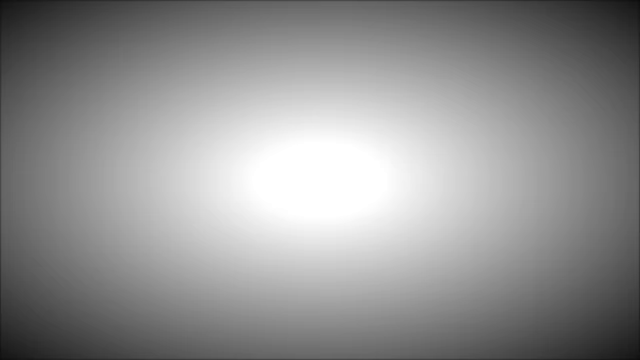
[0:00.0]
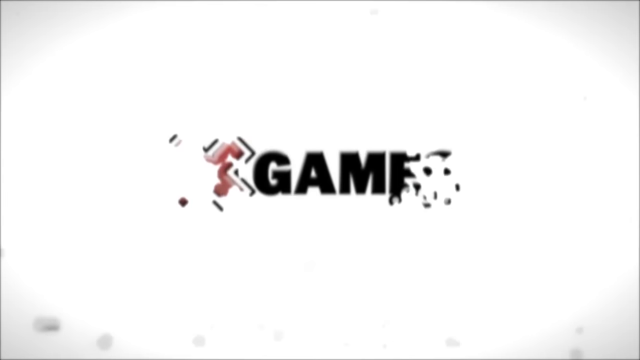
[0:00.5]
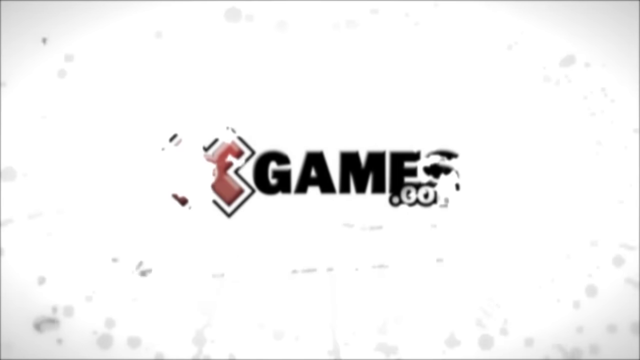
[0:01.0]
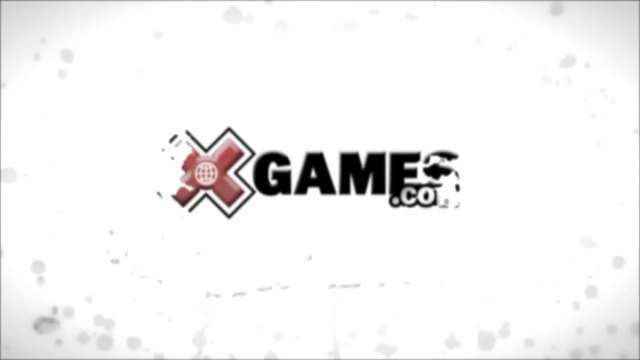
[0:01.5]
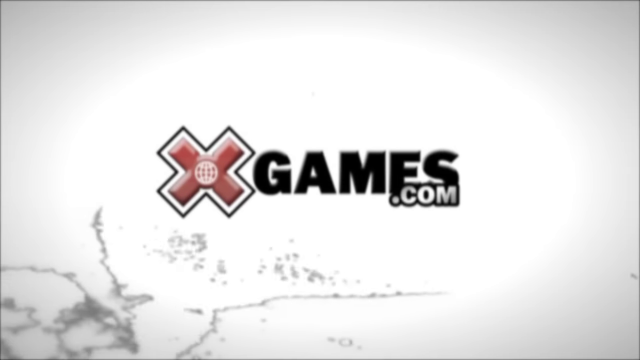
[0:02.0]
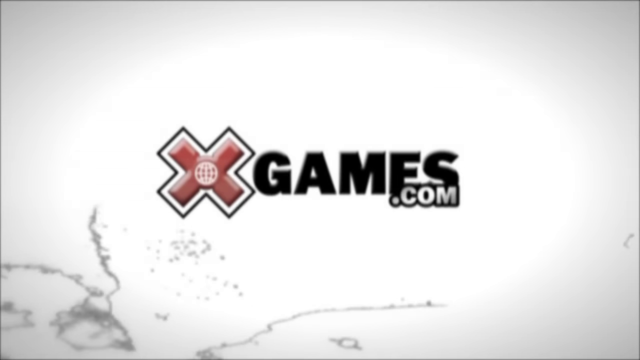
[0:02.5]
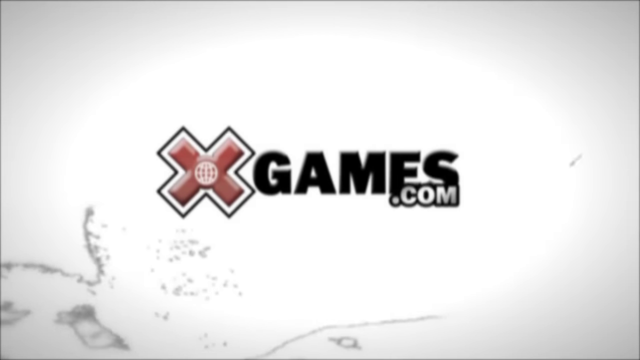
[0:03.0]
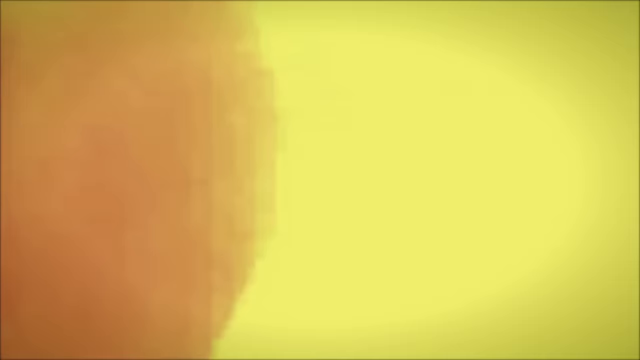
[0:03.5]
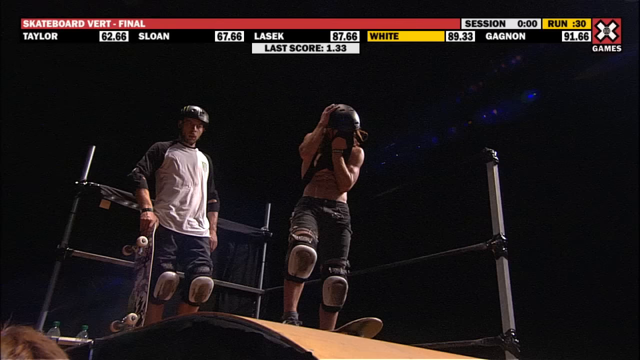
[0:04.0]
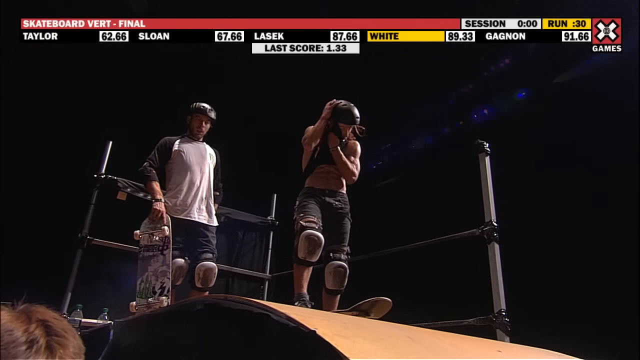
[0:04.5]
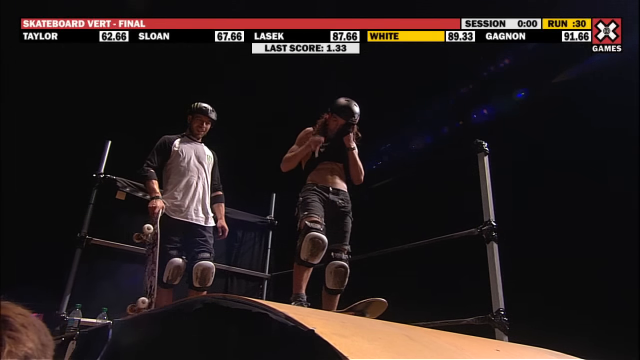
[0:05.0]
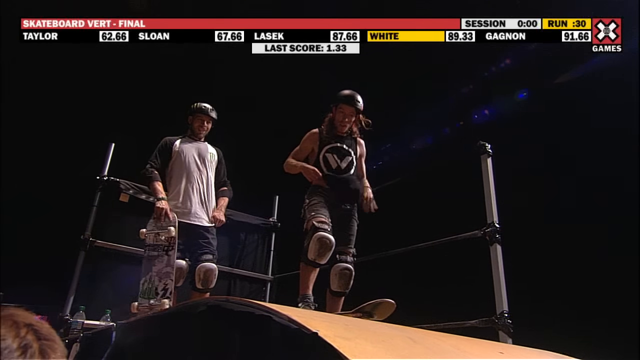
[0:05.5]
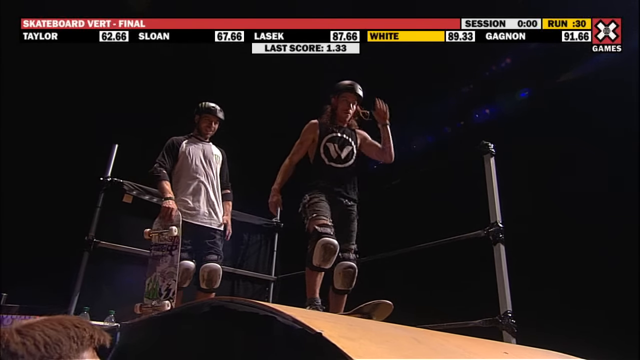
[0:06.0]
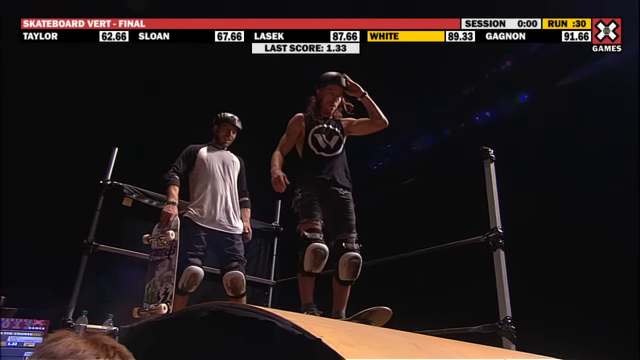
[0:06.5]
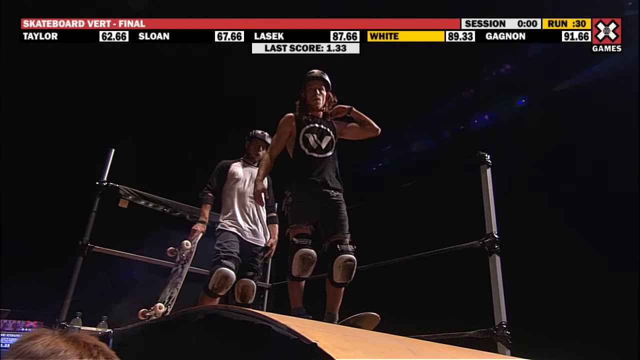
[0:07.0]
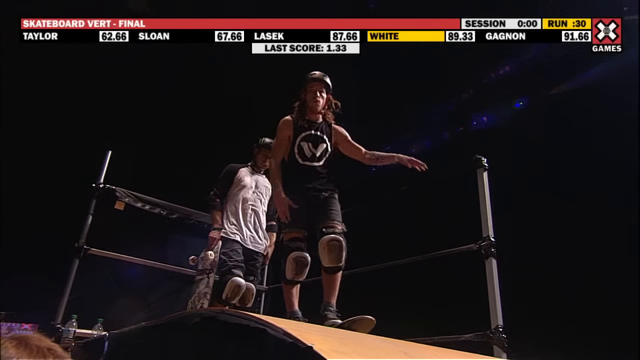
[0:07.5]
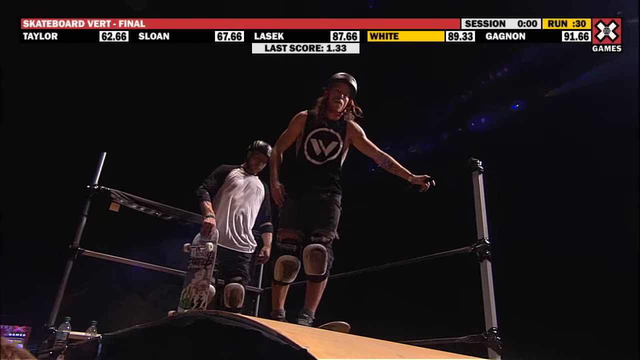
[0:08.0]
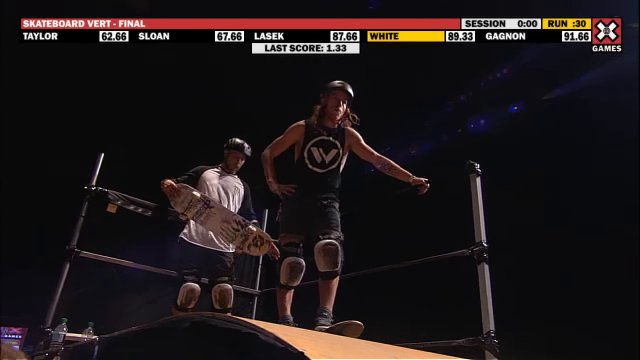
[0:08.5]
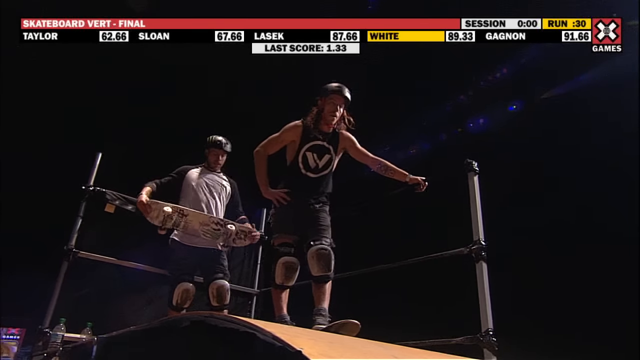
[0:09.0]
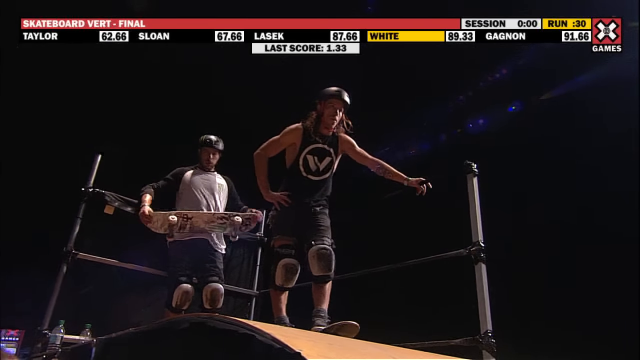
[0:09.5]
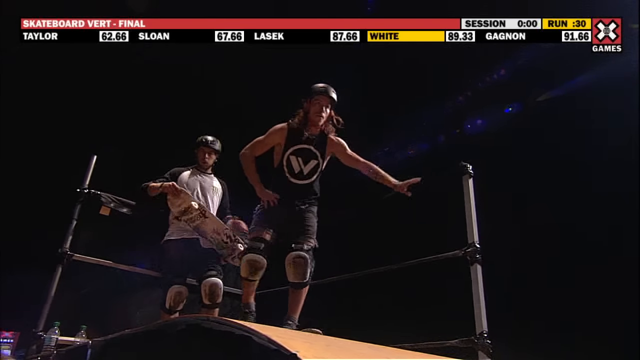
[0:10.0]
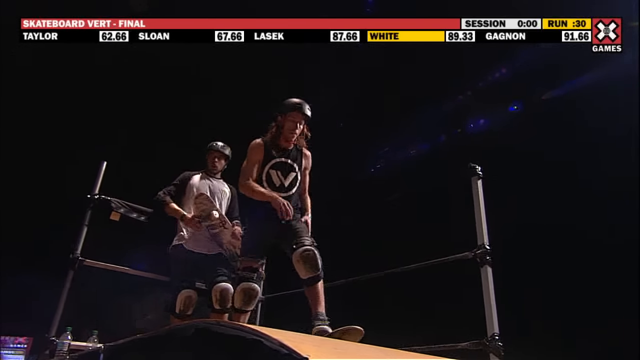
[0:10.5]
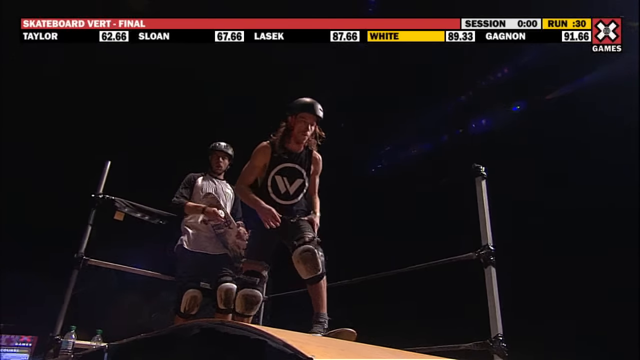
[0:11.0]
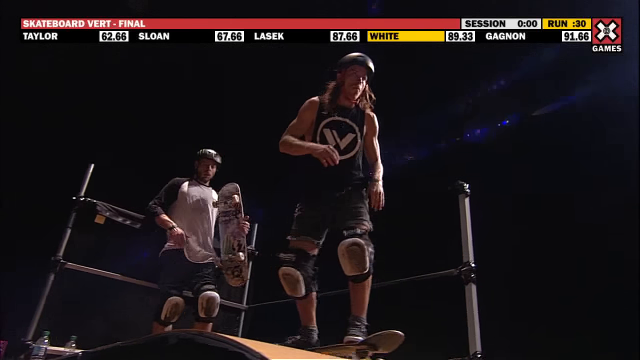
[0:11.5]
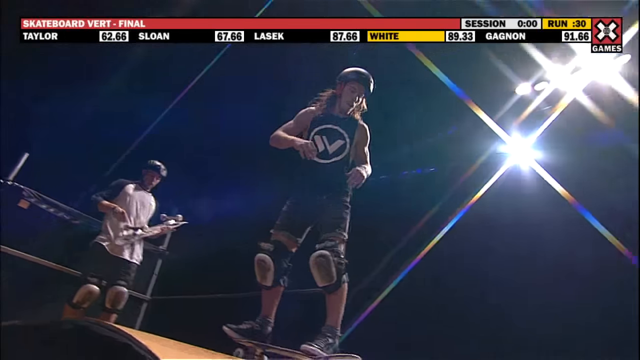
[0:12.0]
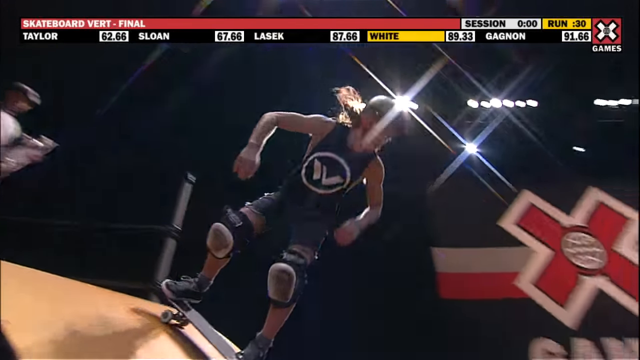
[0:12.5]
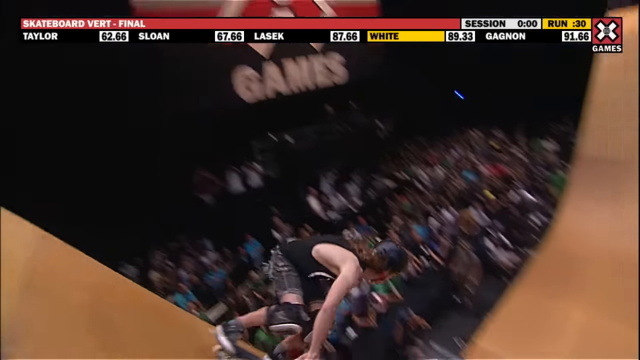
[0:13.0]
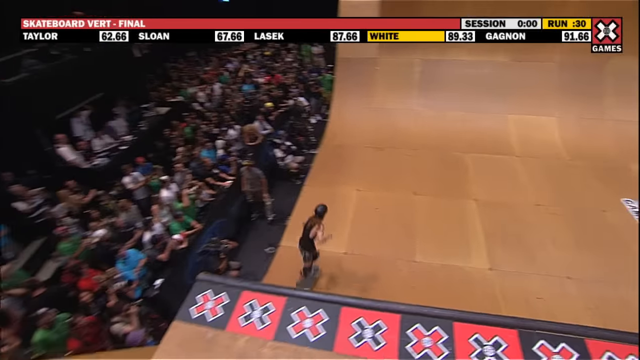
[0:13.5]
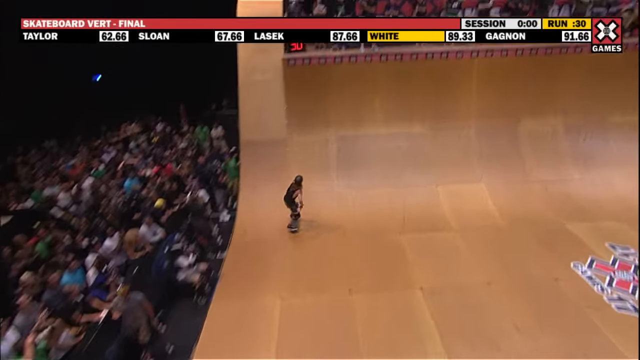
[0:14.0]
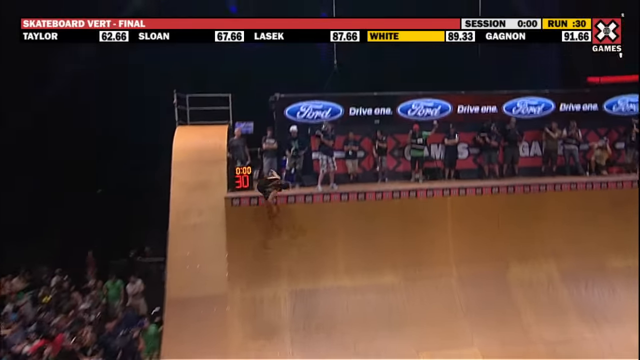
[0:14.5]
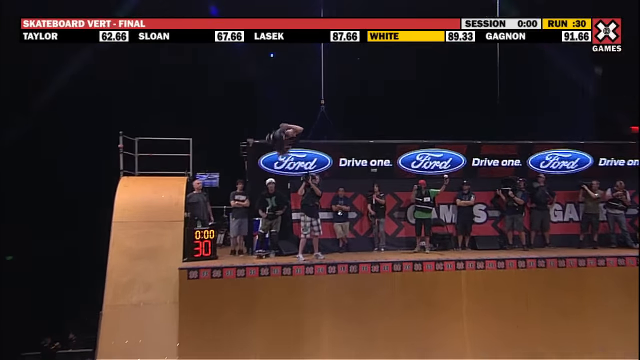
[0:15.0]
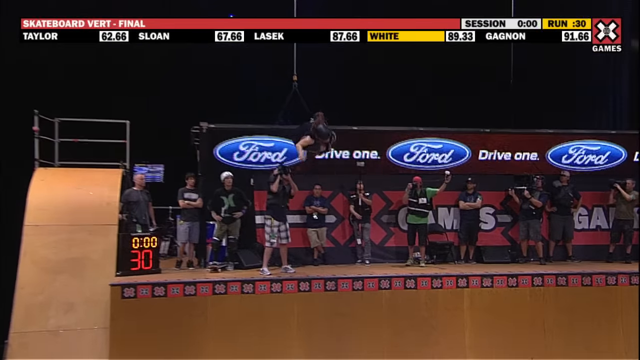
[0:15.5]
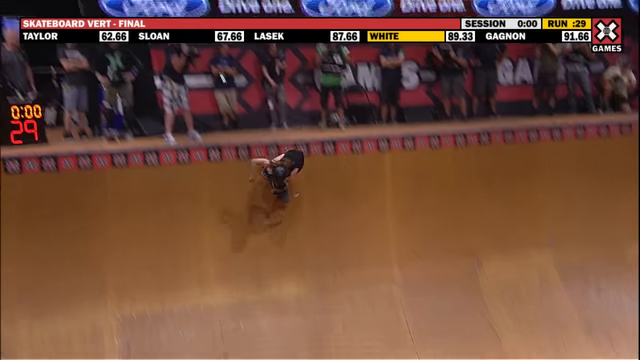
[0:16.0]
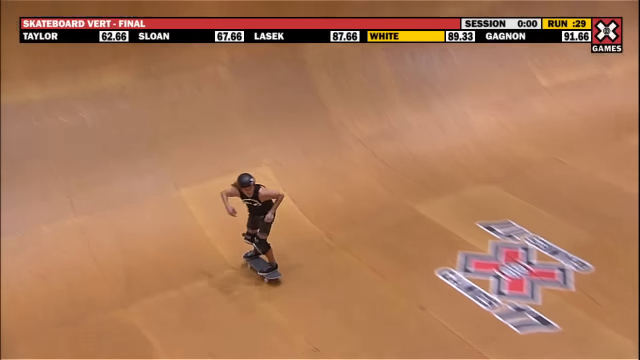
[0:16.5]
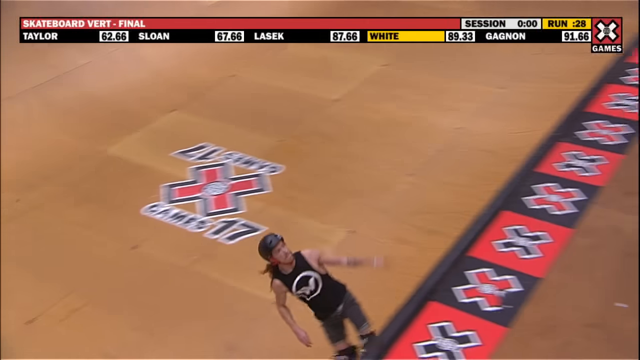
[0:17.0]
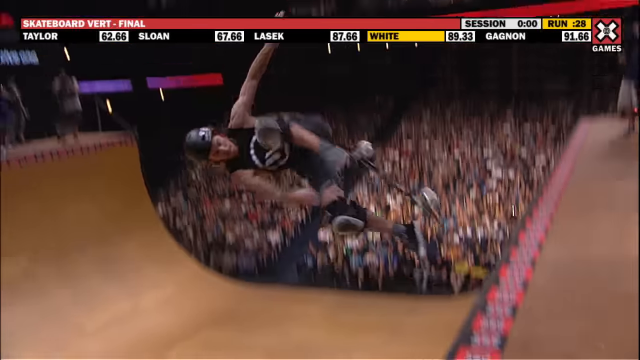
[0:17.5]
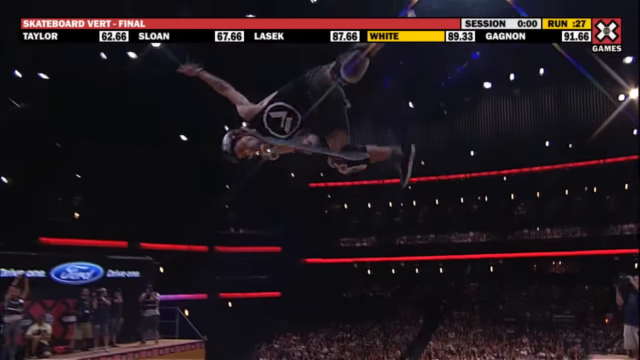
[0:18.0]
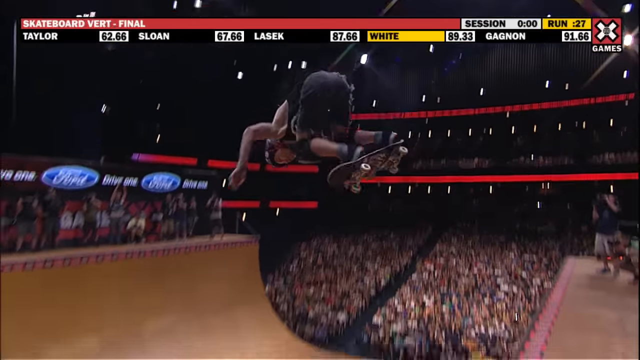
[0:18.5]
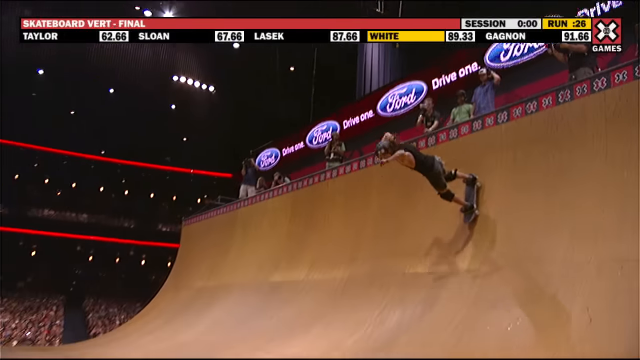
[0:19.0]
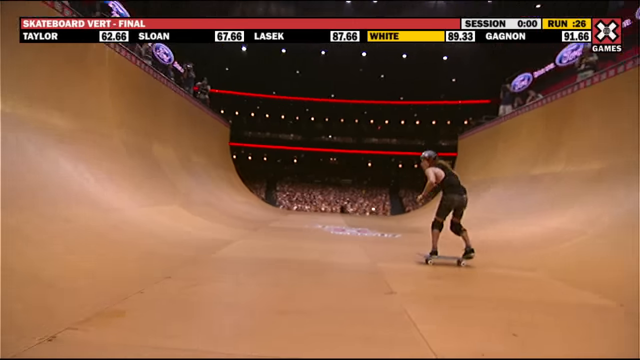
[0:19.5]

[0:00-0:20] Two skateboarders wearing helmets are at the top of a ramp, looking like they are about to go down, and seem to be thinking about their tricks beforehand. The one in a black t-shirt goes down, lifts off the ramp and does a series of tricks going back and forth. In one trick he lifts off the ramp, catches the skateboard in his hand, puts it back down quickly and lands on it. The skateboarder standing at the top of the ramp watches the other one and never joins him on the ramp. A big crowd is all around them, watching. There is railing at the top of the ramp where they start, and many camera people are recording and probably taking images.